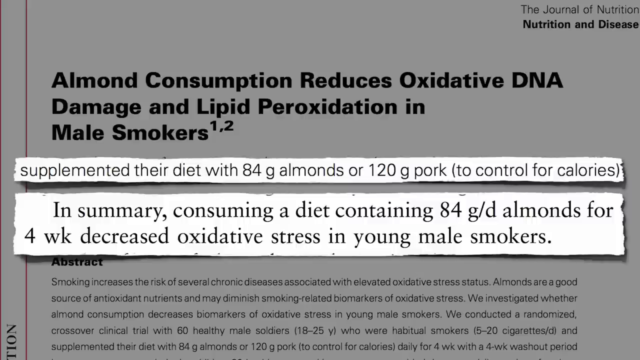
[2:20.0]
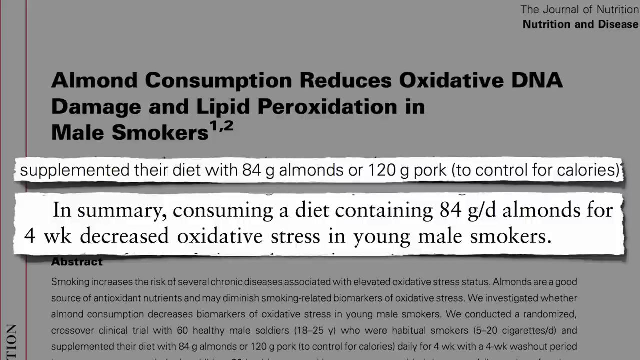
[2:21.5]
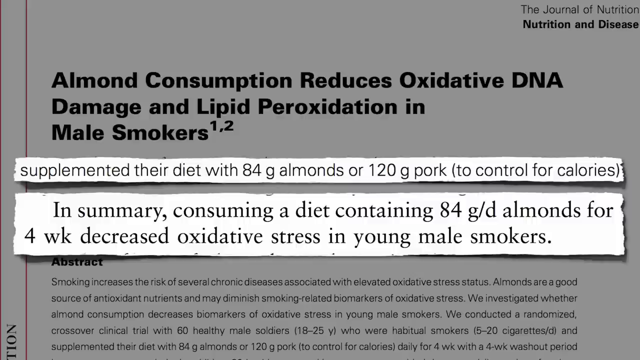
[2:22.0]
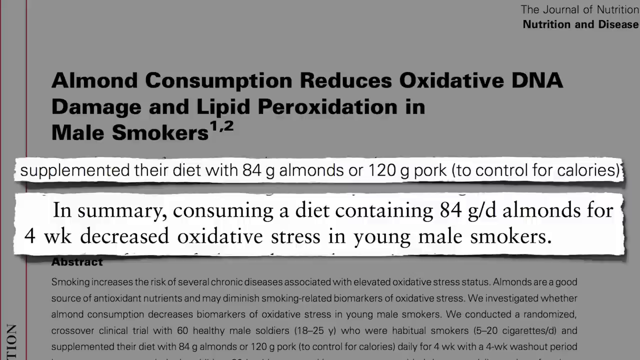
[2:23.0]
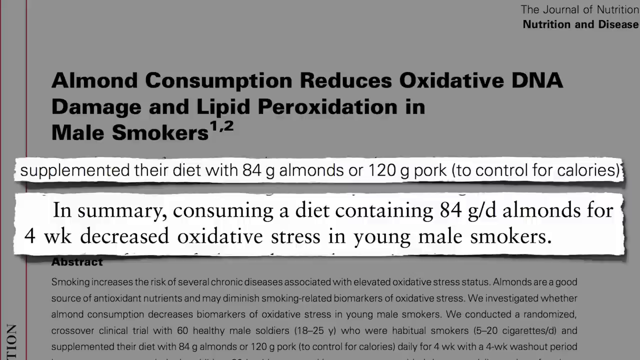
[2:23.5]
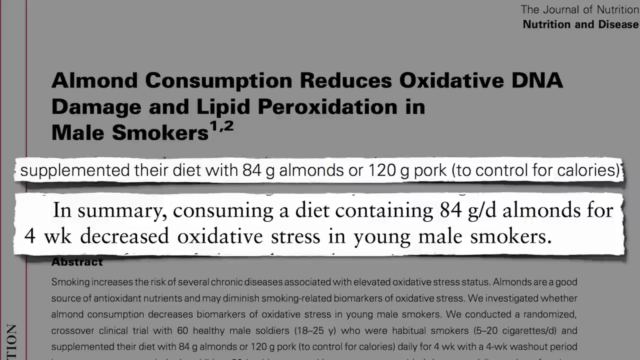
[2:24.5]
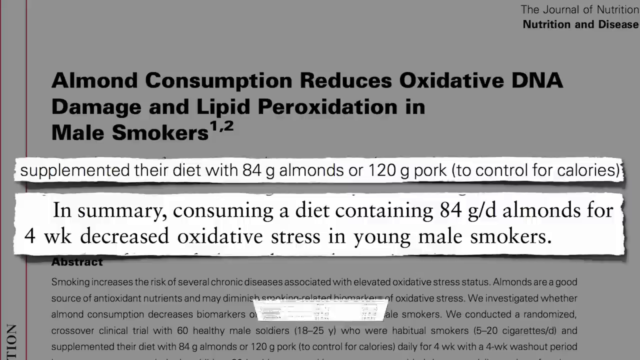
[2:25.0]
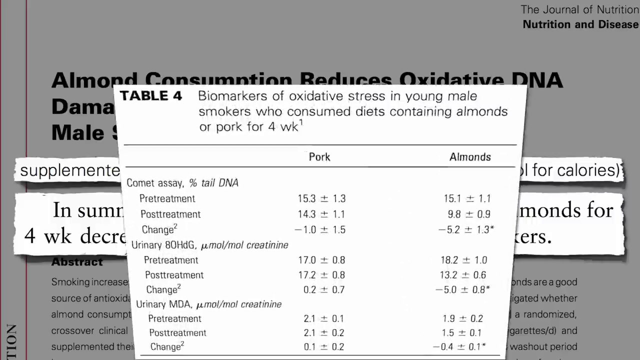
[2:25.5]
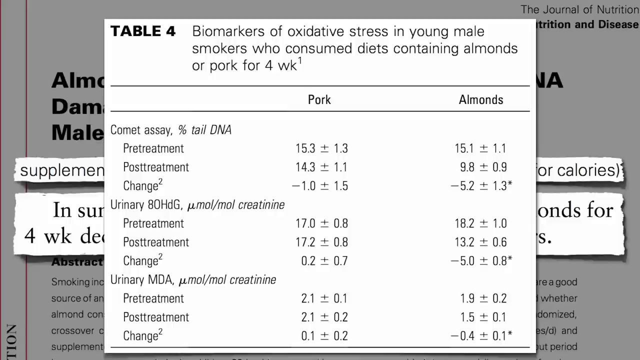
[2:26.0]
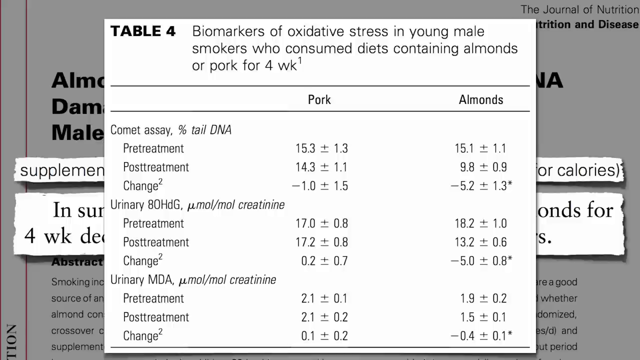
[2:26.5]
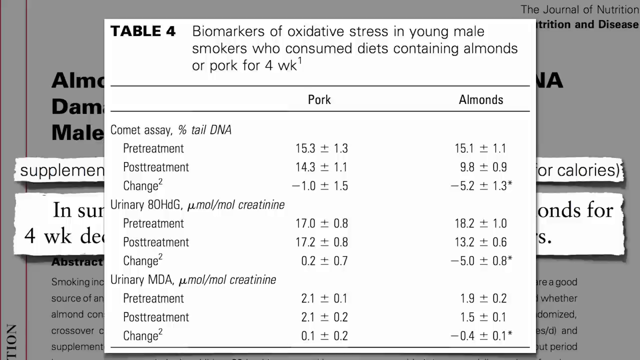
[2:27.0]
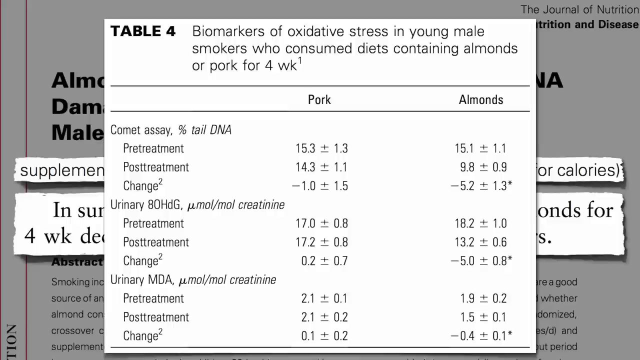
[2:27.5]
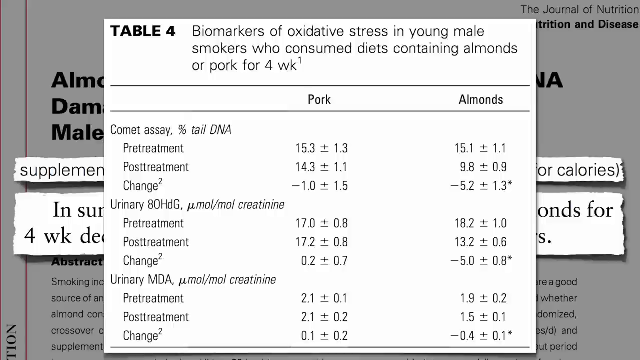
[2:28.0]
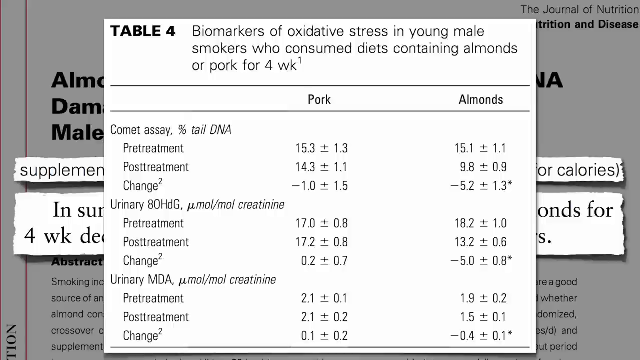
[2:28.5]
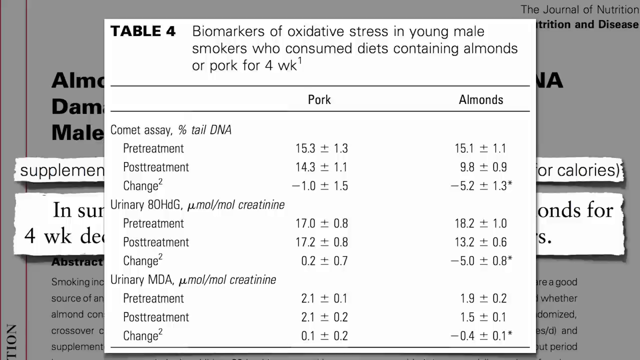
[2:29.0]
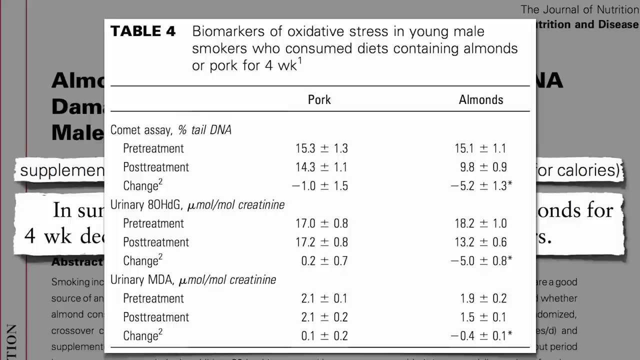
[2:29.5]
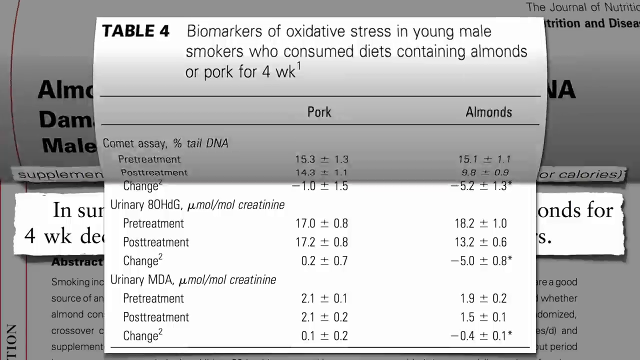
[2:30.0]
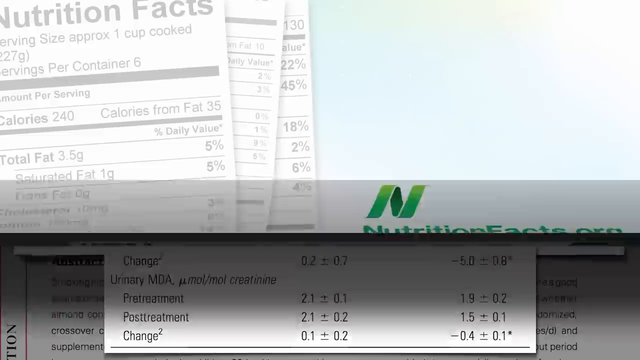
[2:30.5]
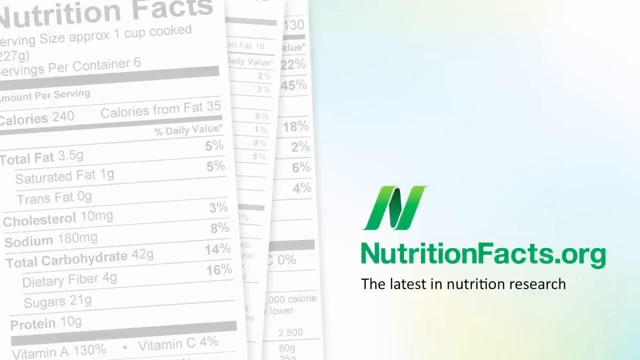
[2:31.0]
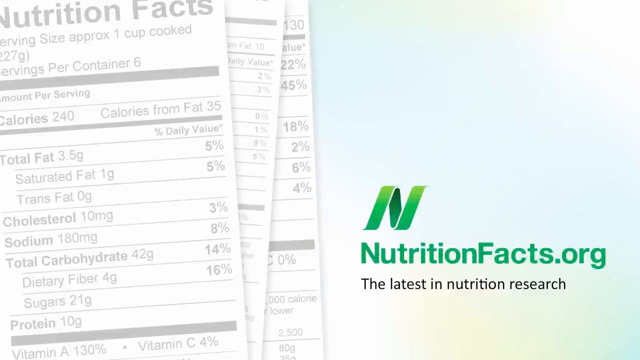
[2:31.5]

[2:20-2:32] The same article about eating nuts and male smokers is on screen when a new table pops up over it: "table four, biomarkers of oxidative stress in young male smokers who consume diets containing almonds or pork for four weeks." It gives a list for pork and a list for almonds, with different numbers for each. The article then ends and the video shows the website or YouTube page, nutritionfacts.org, "the latest in nutrition research."